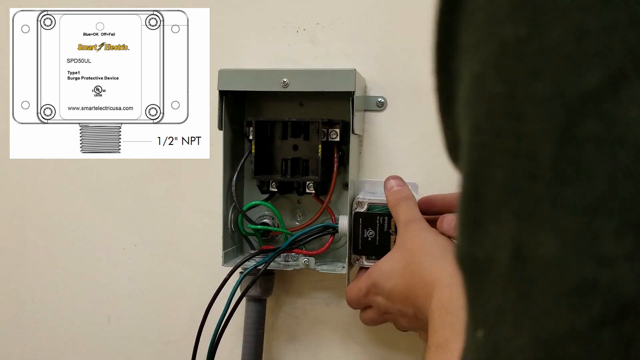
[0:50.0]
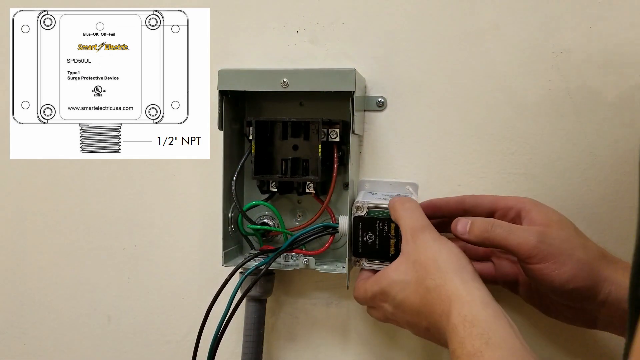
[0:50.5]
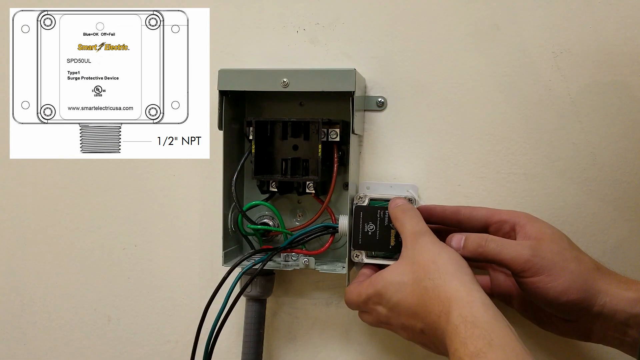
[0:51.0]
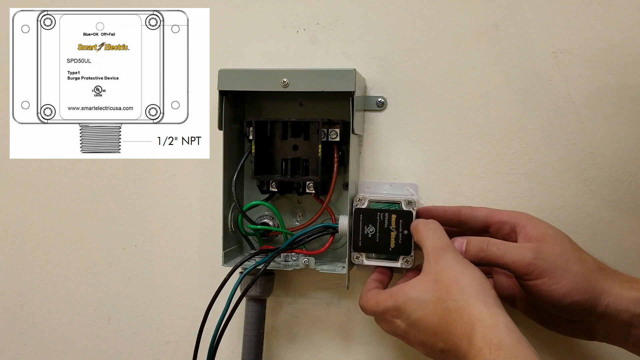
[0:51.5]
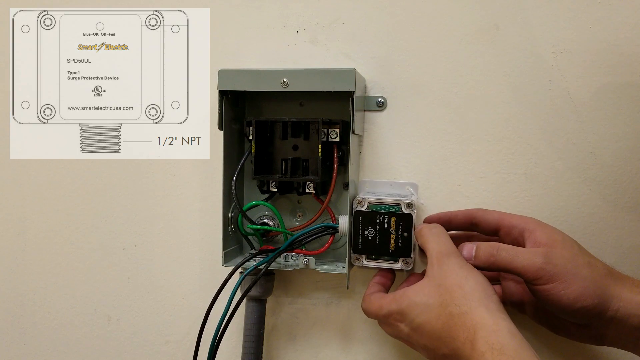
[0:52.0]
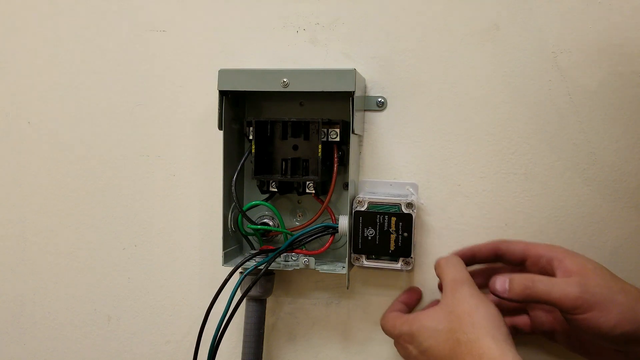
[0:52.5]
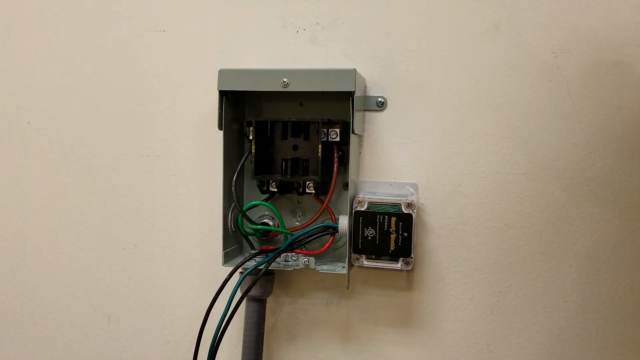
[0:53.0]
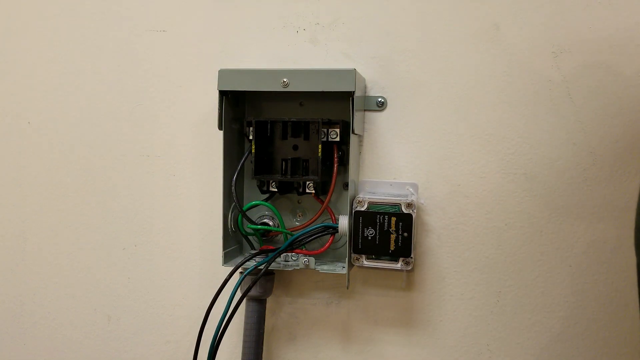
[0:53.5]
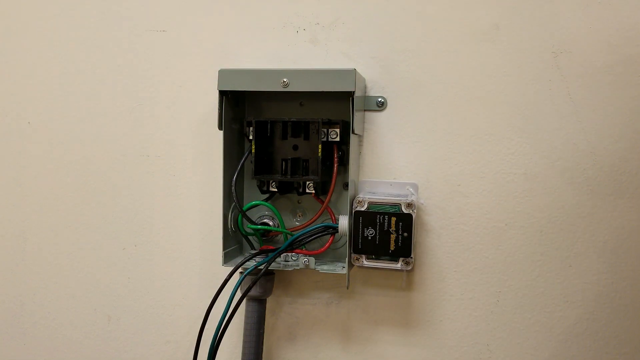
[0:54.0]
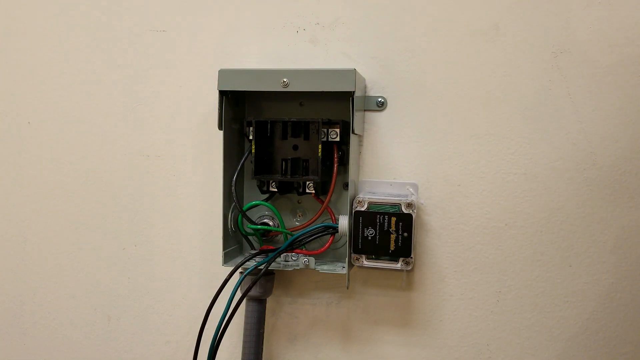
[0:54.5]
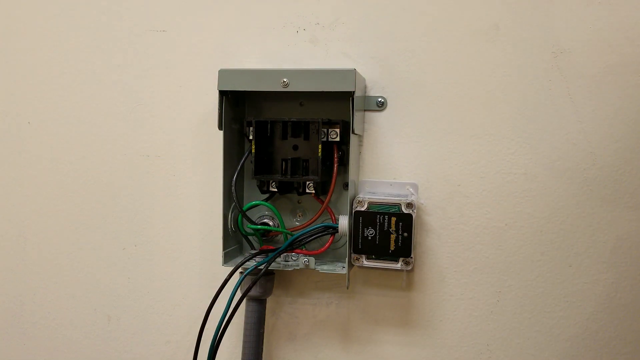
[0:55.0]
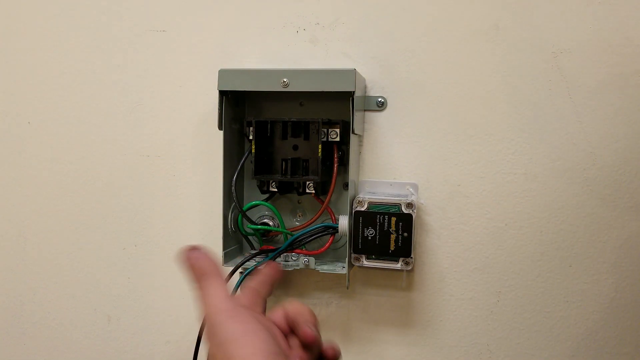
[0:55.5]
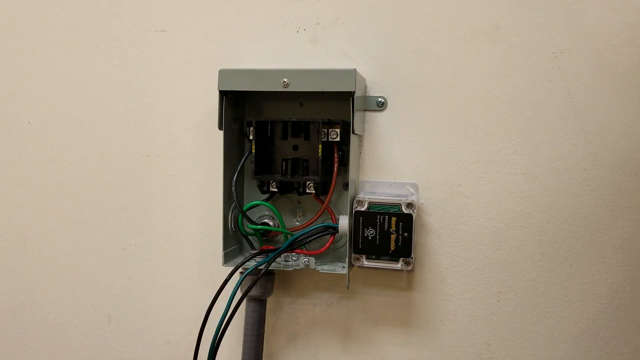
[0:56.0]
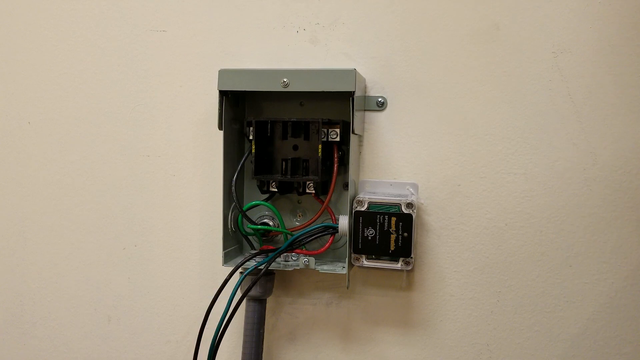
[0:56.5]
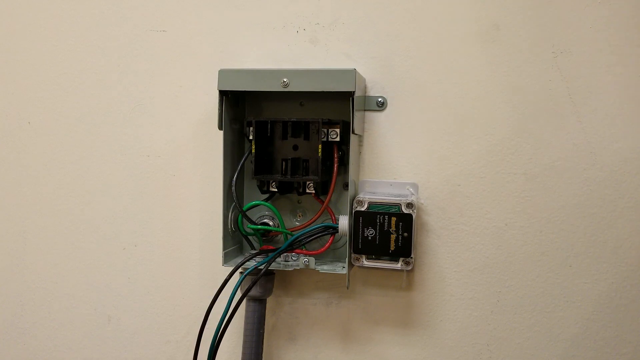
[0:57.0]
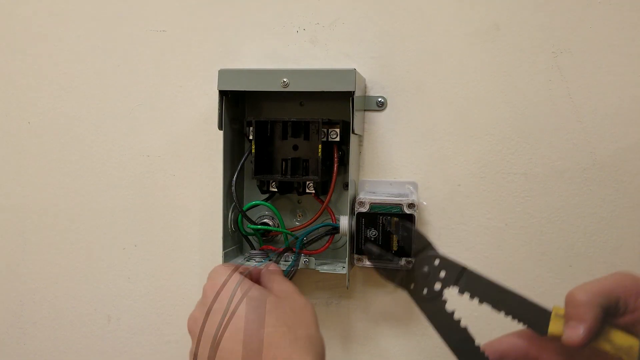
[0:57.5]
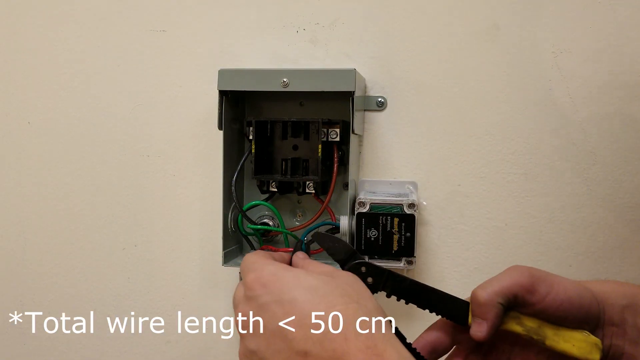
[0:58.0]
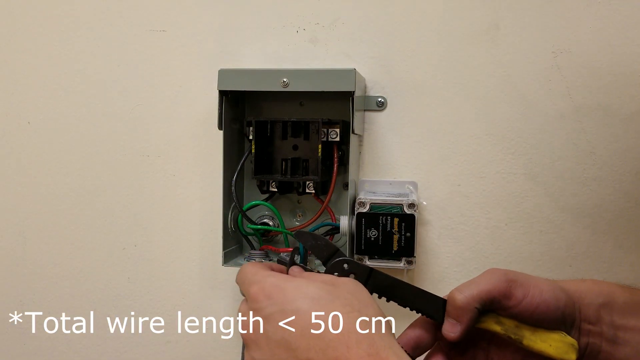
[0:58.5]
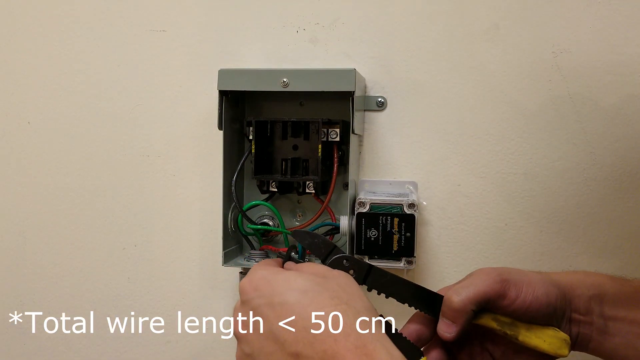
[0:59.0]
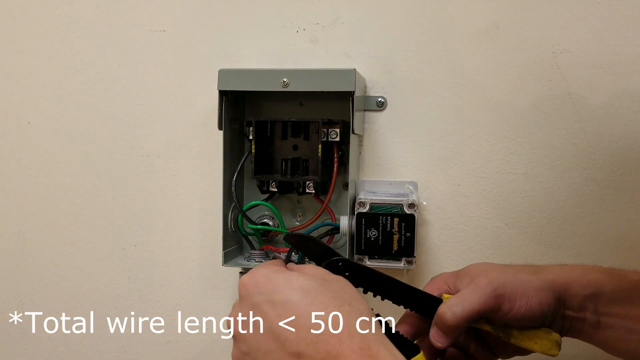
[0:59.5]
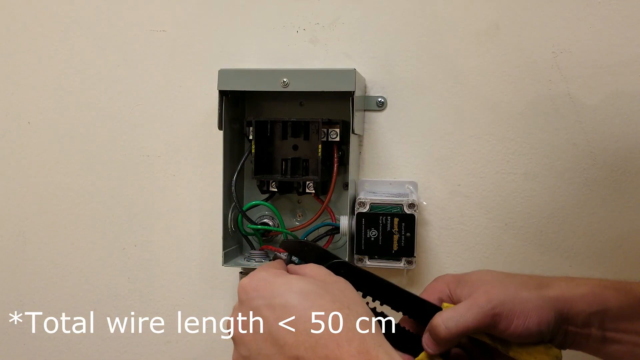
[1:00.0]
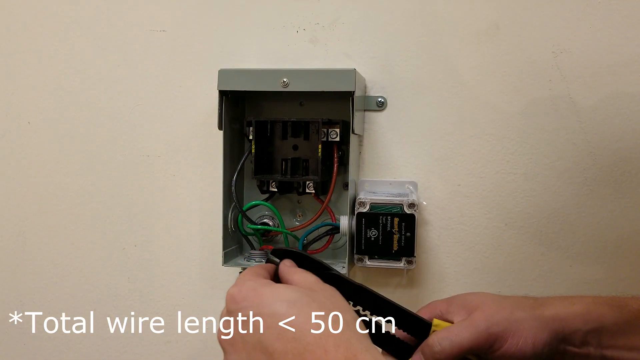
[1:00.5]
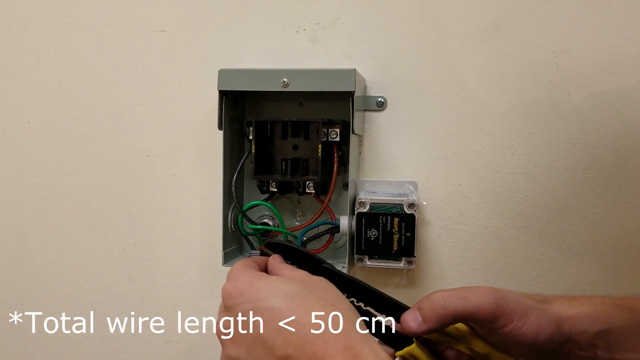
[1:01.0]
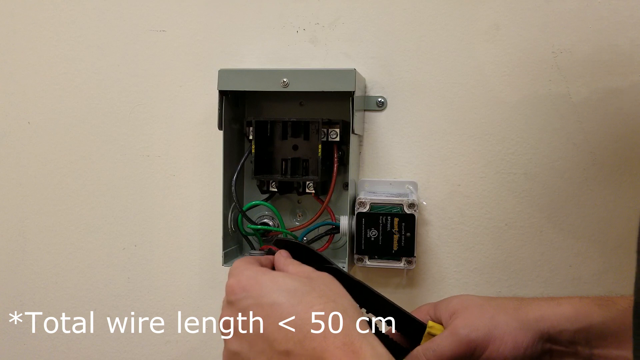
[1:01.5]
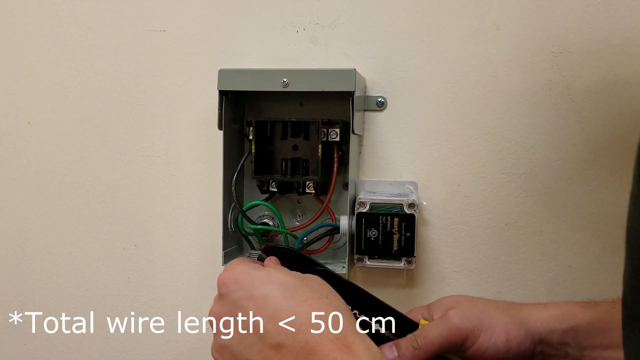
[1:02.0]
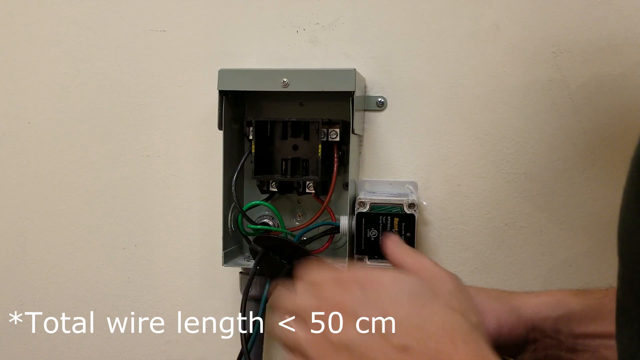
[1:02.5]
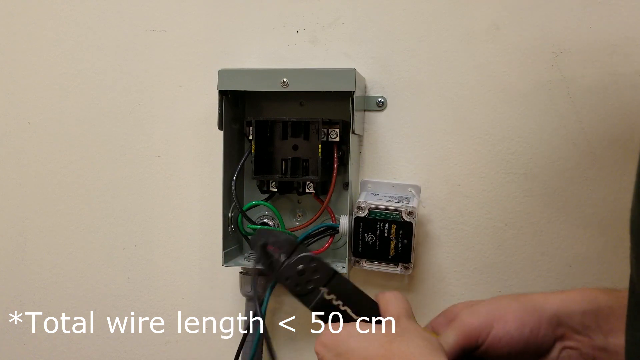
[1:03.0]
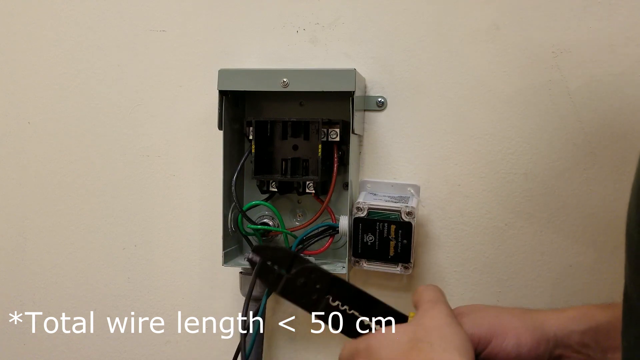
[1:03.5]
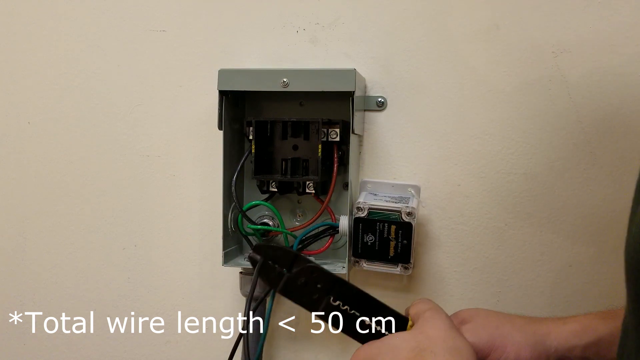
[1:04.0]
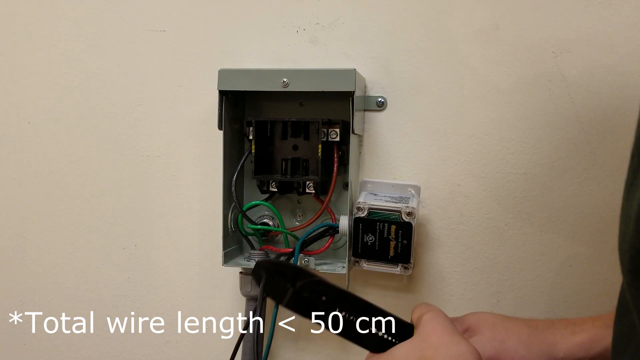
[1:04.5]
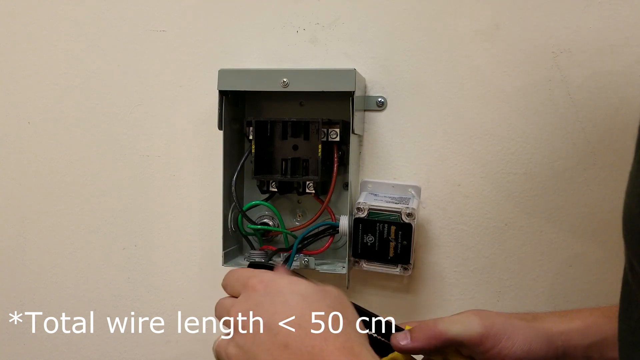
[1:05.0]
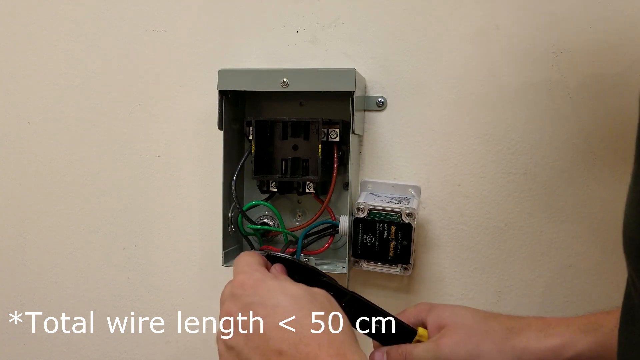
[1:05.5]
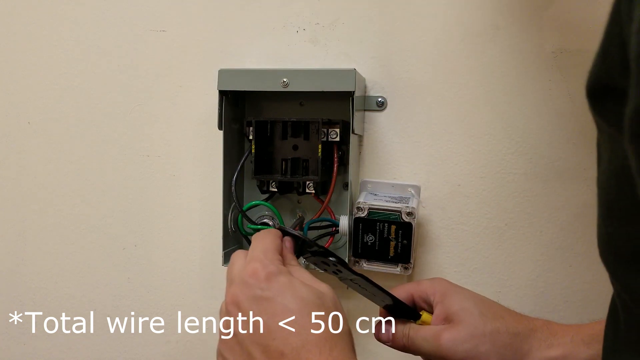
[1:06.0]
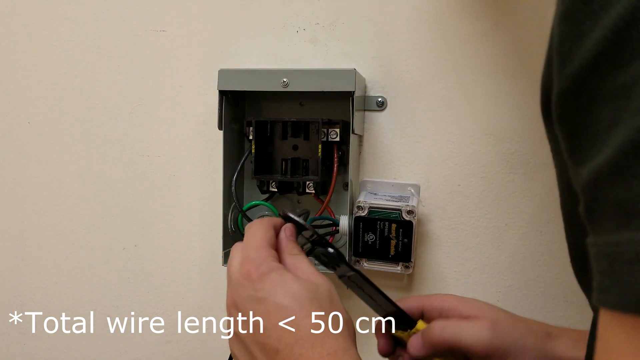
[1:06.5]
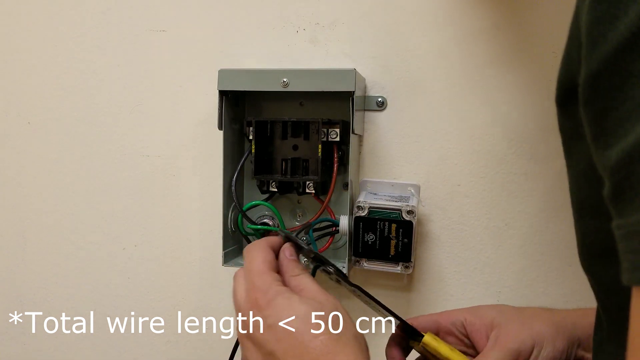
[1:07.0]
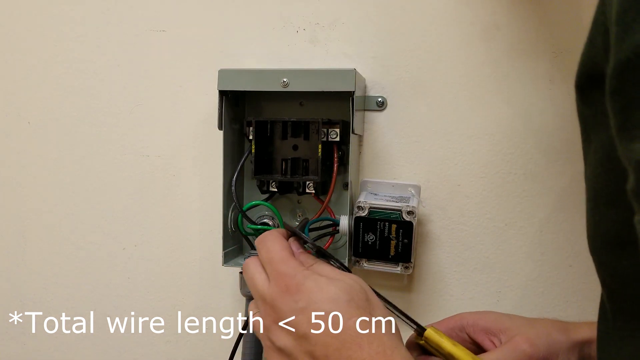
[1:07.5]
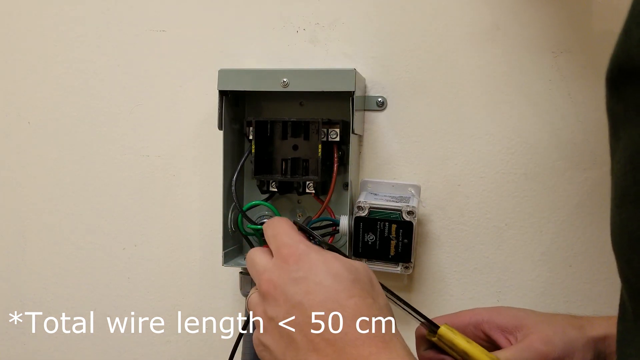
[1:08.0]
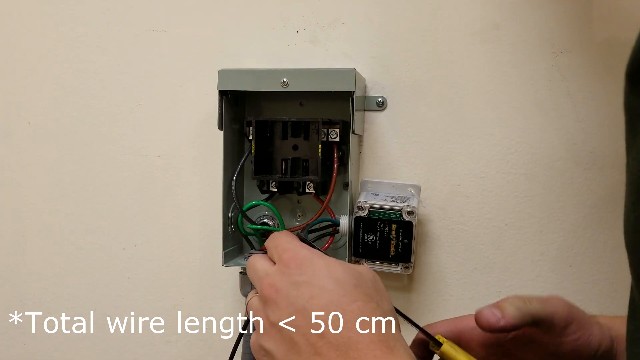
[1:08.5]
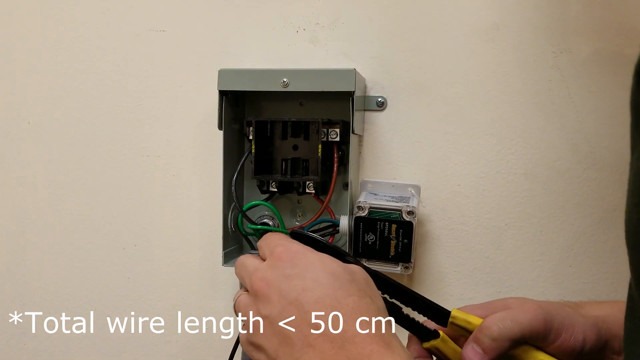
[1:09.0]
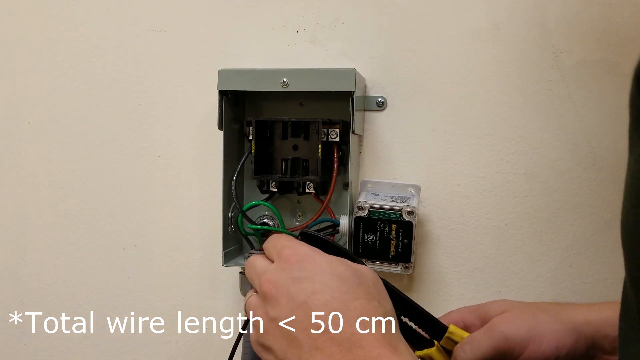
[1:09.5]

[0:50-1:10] Once the surge protective device reaches the end, he nestles it into the hole in the panel so that it sits there without falling off. The wires hang inside the panel and loosely over where it is exposed. He shows the surge protective device, his hand briefly coming up to do so. The next shot shows the panel and the wires connected to the surge protective device. He uses a pair of pliers or something similar to cut the wires, while white overlay text reads "* total wire length is less than 50 cm." The video cuts before he finishes cutting the wires, which apparently need to be cut to fit the panel.